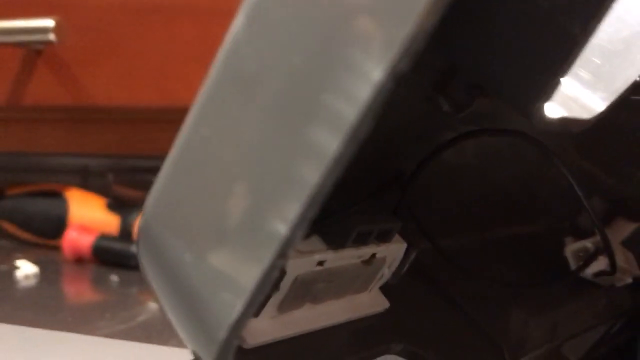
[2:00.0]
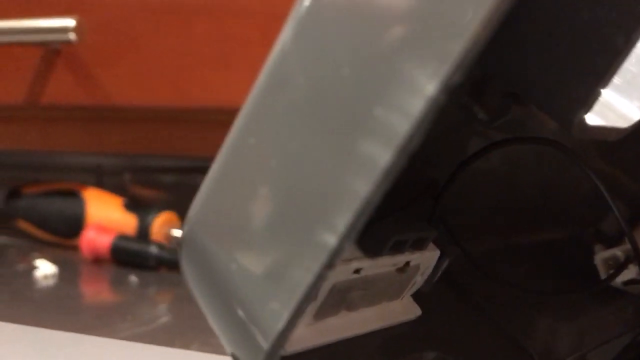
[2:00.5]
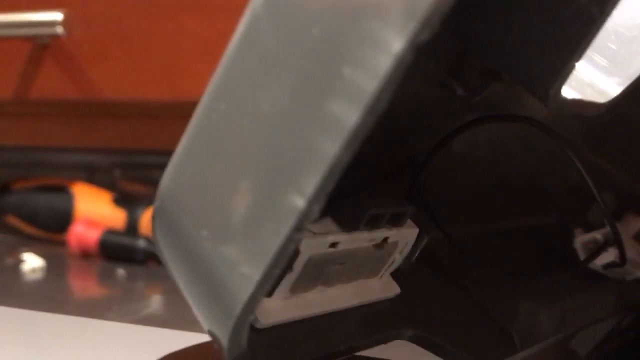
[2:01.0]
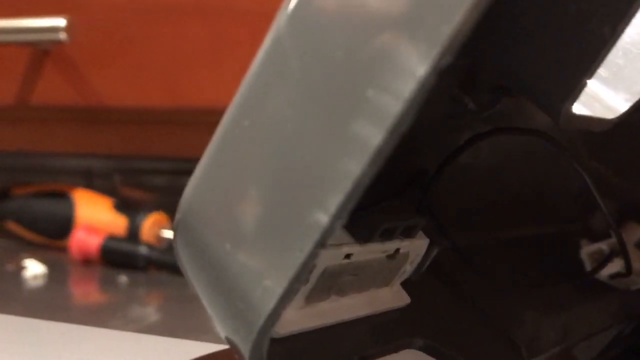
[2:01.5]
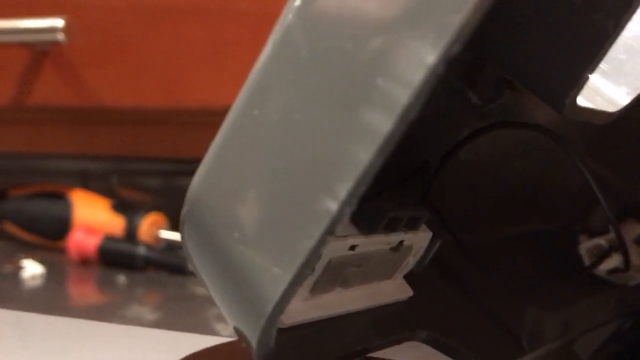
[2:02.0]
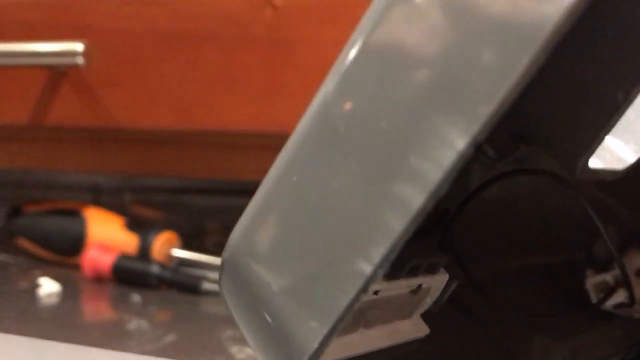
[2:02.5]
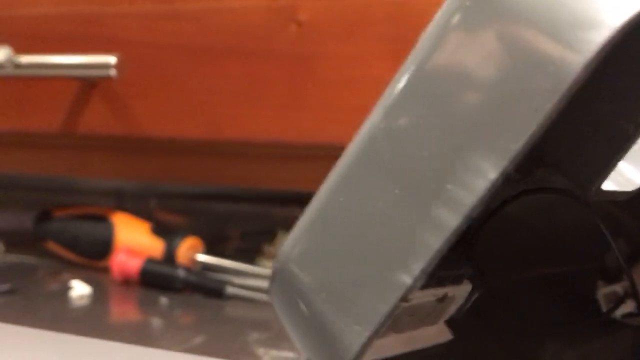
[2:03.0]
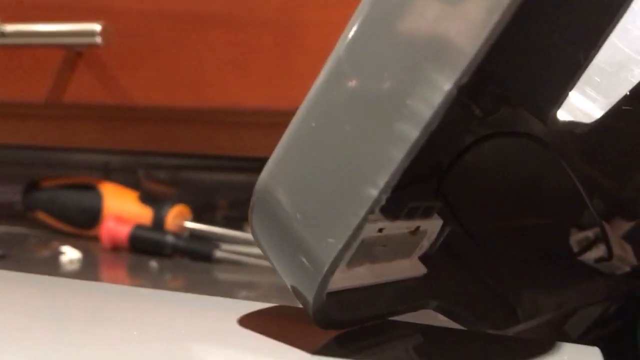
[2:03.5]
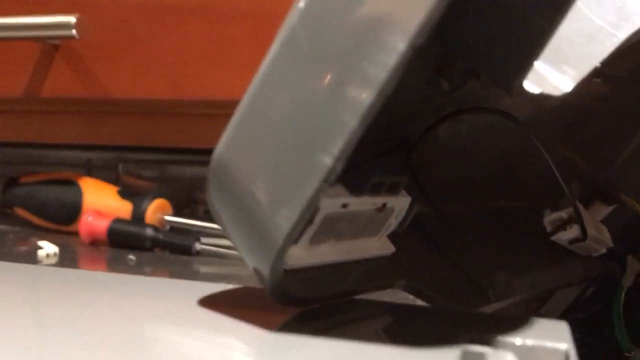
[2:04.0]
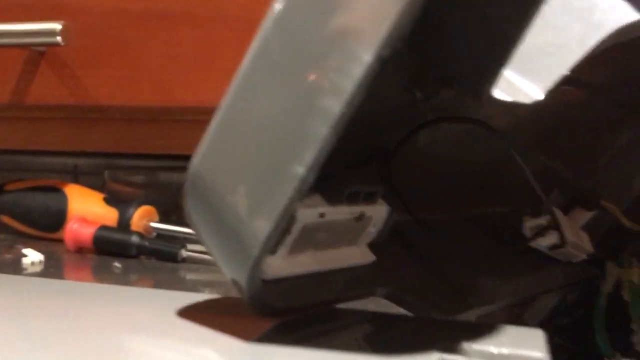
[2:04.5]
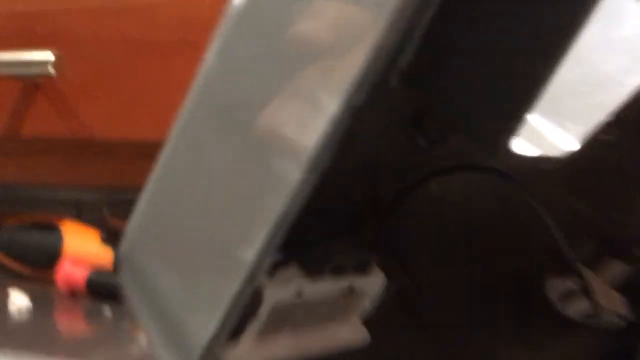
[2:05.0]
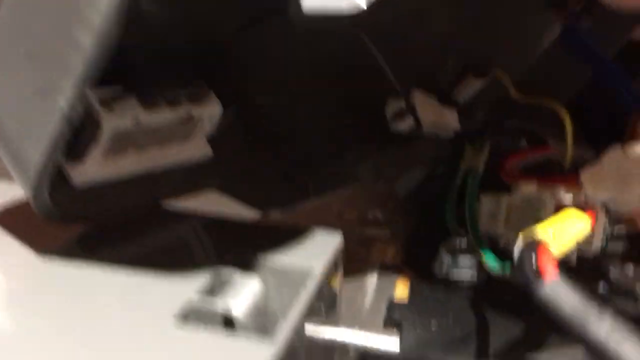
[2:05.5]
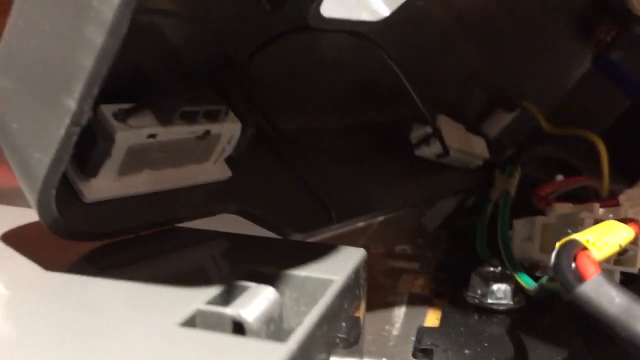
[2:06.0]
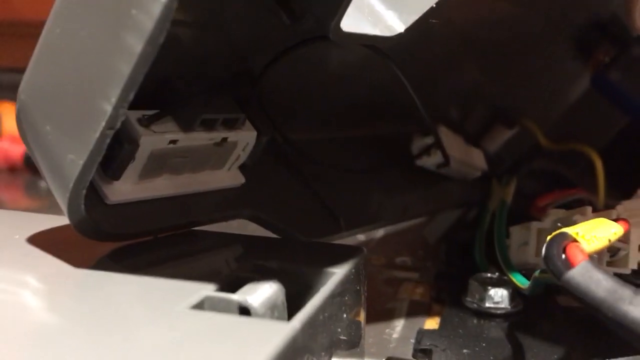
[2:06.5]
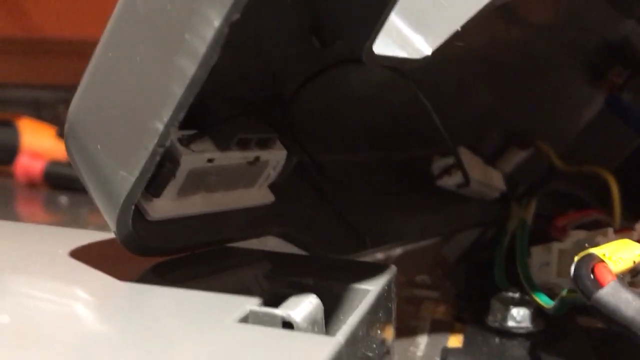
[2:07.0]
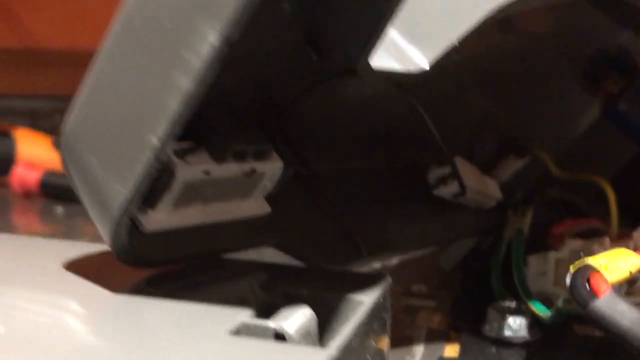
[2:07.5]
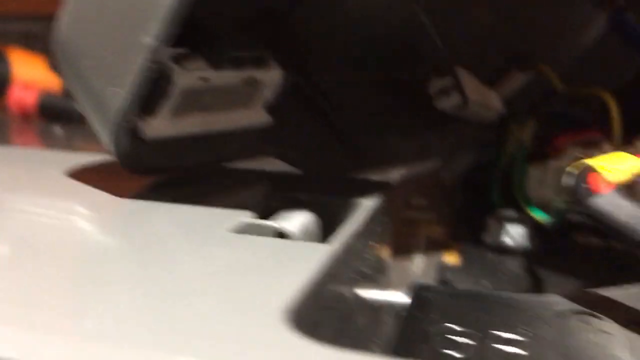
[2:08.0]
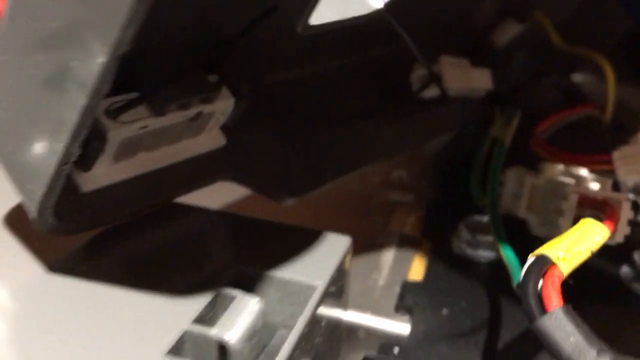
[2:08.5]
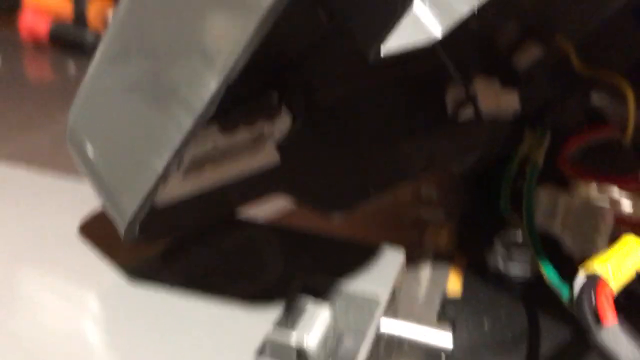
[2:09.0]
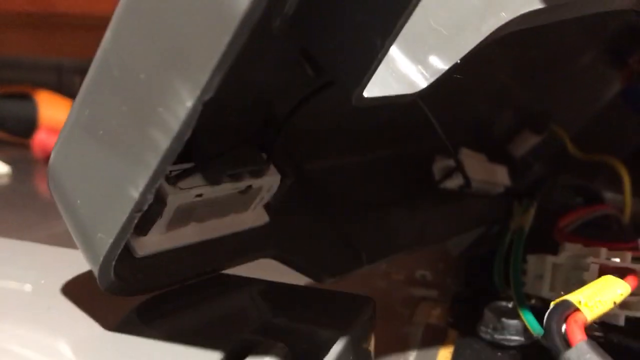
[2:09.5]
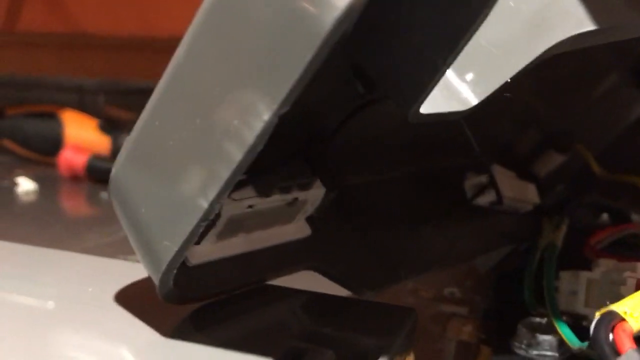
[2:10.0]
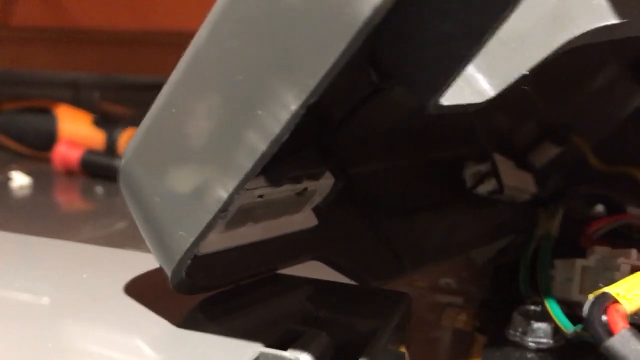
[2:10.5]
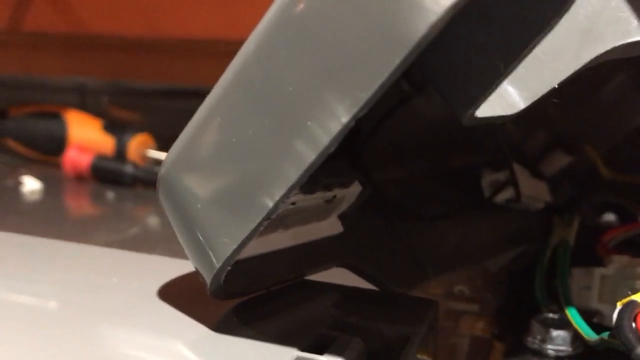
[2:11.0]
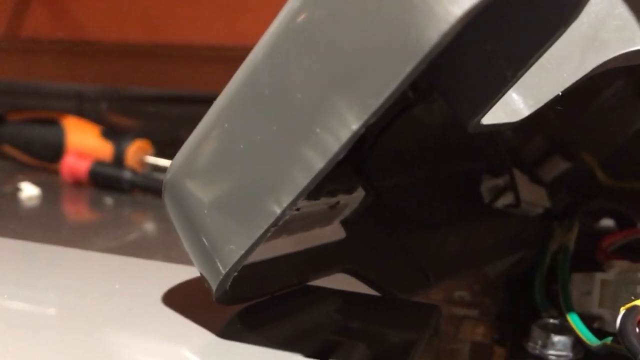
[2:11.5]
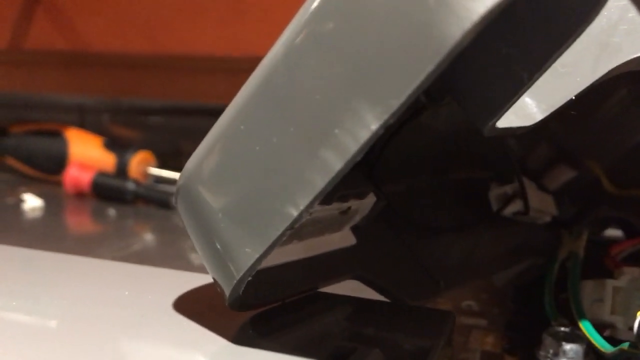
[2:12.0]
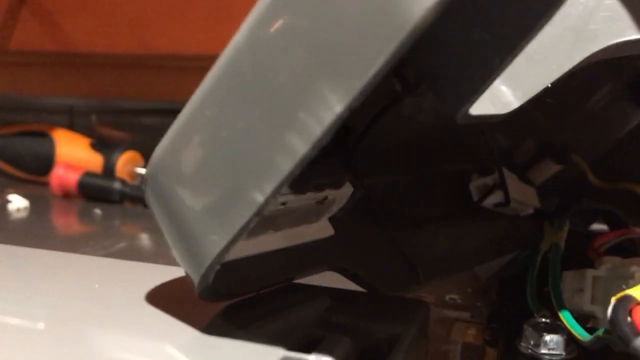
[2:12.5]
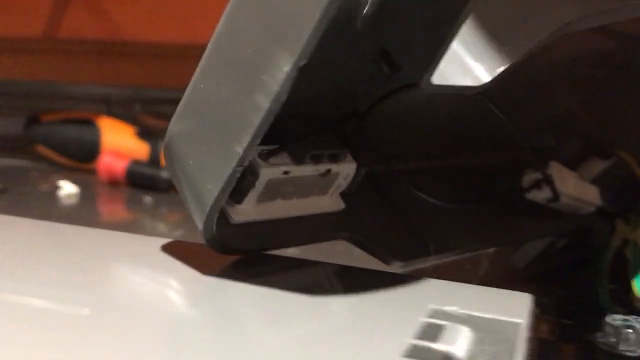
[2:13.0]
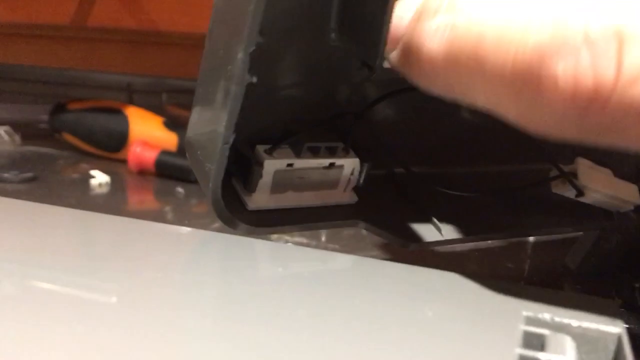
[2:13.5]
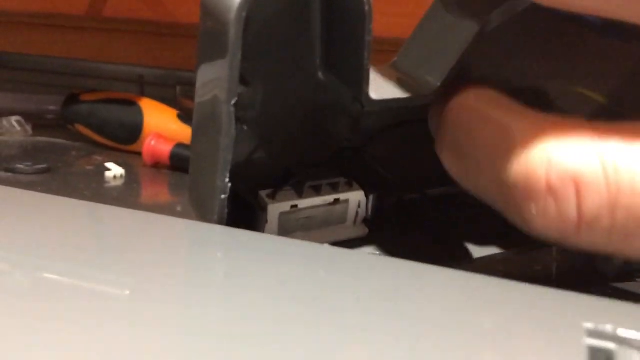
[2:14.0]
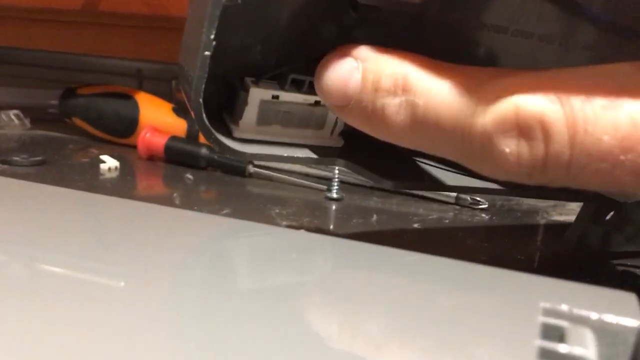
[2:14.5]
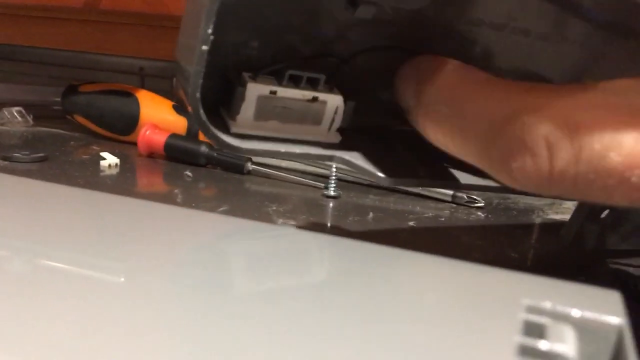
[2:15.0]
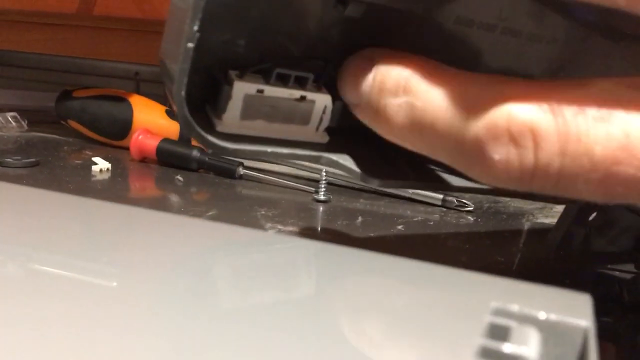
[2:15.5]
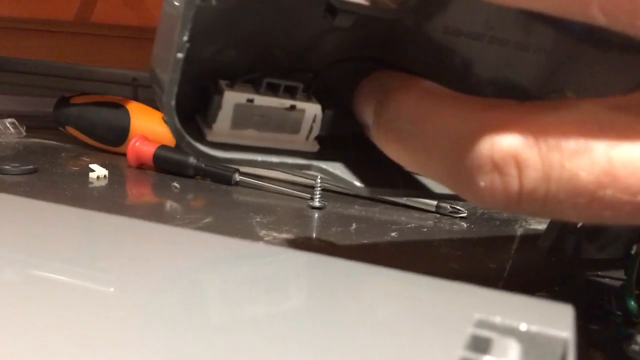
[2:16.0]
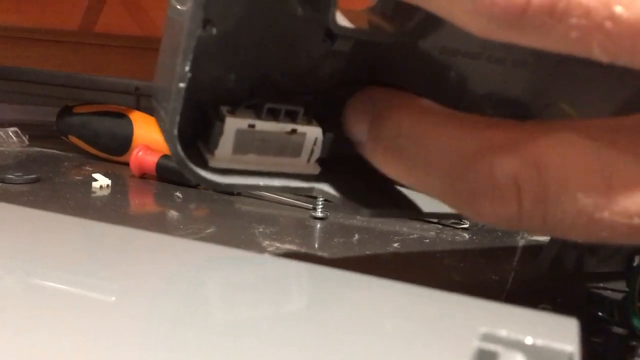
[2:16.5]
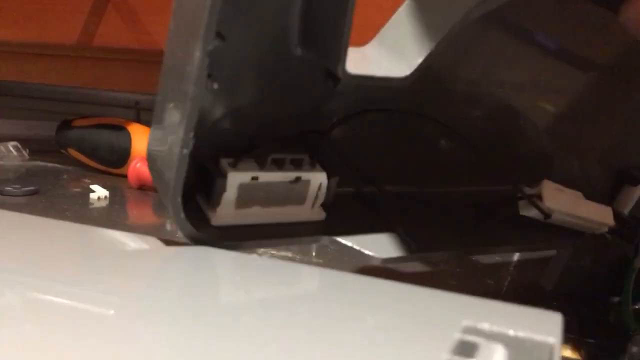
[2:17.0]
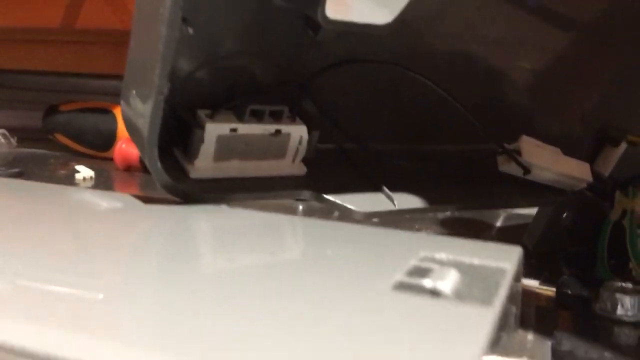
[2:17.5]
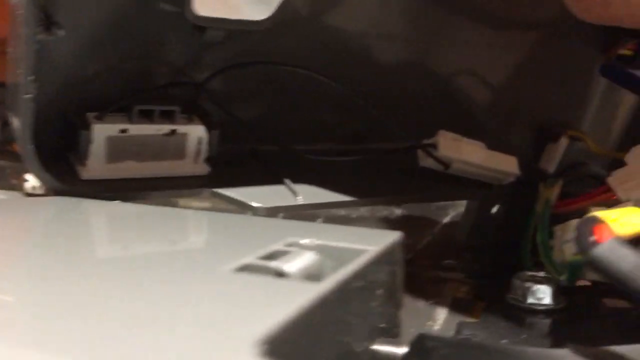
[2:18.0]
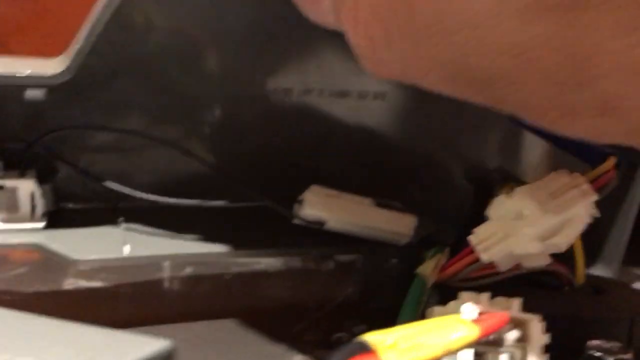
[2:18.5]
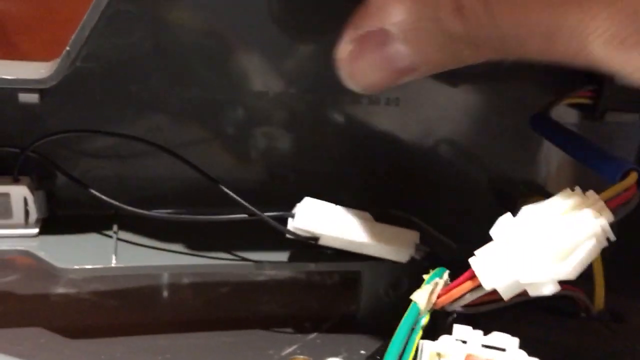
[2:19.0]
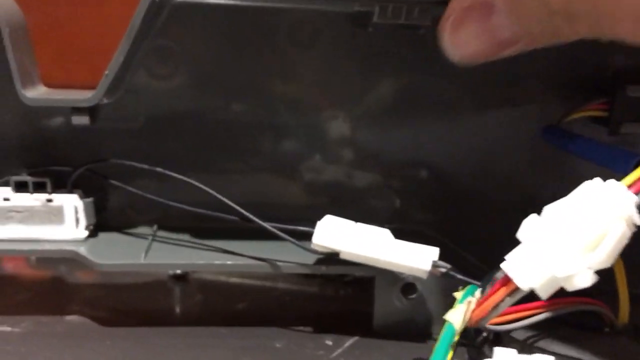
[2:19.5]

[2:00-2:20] In a slightly wide frame, the view is zoomed in at the center on the base of a plastic piece that fits over the top right corner of the right-hand door of a stainless steel fridge. The cover is tilted upward, revealing a white power connector attached in the bottom left corner. A black wire comes off it, looping up and to the right, and as the camera zooms out a little more, it leads to more wires and boards underneath where the cap would go. He pushes the cover back a little more and points his index finger at the connector, bringing it further into view of the camera. In the background are a wooden cabinet on the left and the stainless steel top of the fridge at the very bottom, and in the left corner is an orange and black tool that is a little blurred, so it is unclear exactly what it is.